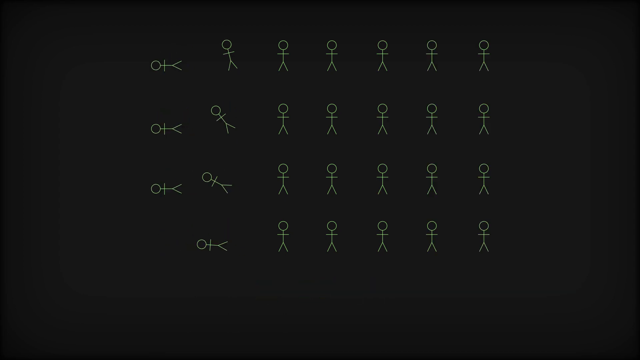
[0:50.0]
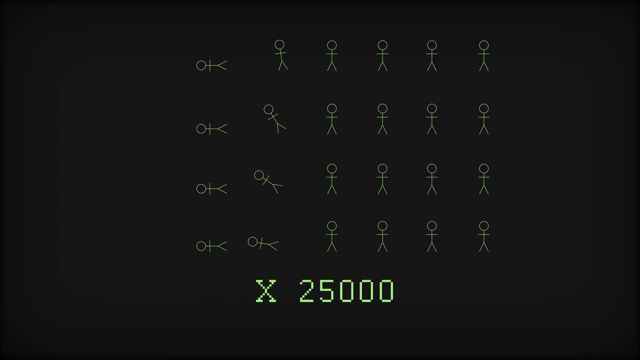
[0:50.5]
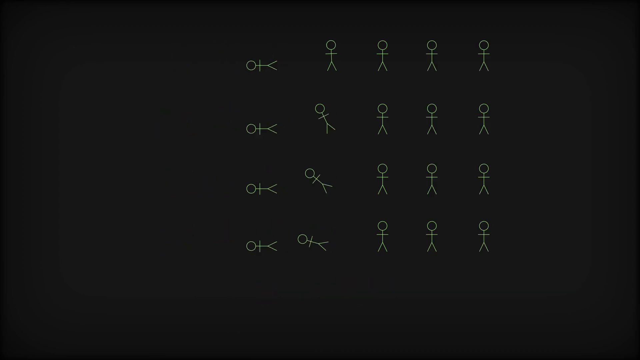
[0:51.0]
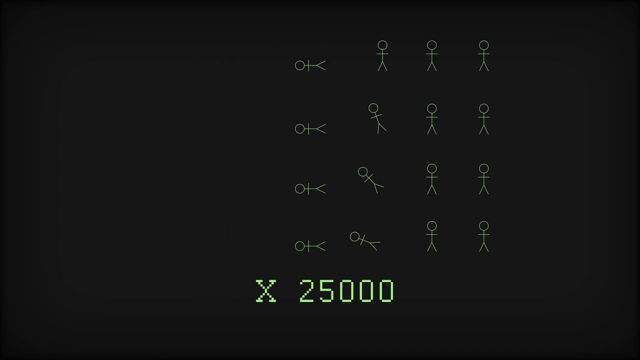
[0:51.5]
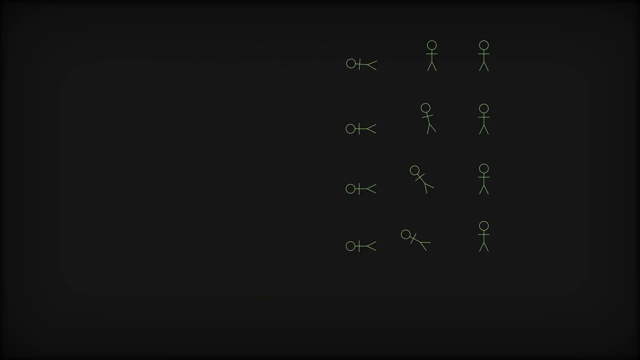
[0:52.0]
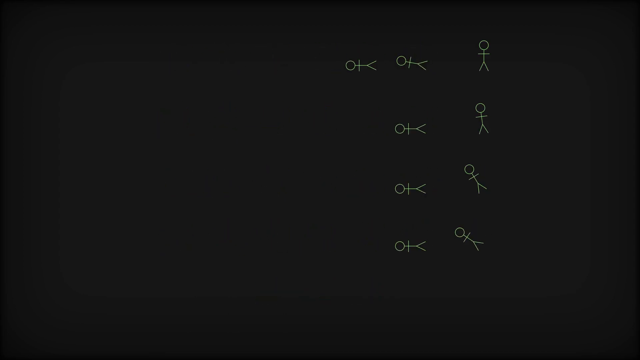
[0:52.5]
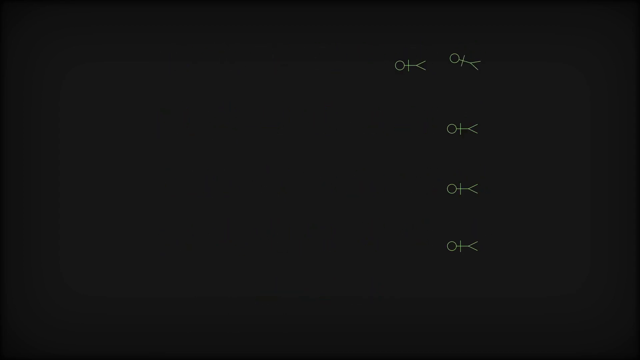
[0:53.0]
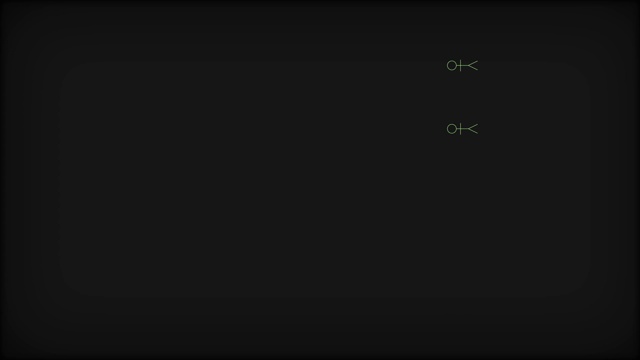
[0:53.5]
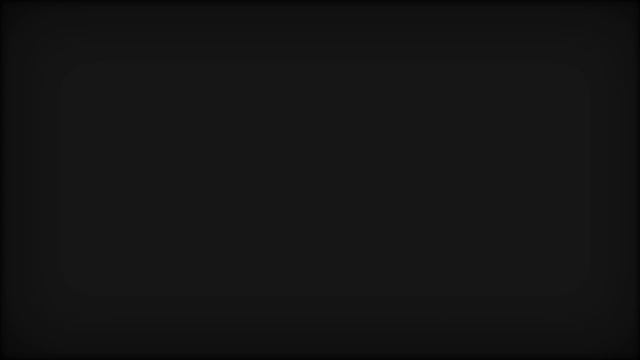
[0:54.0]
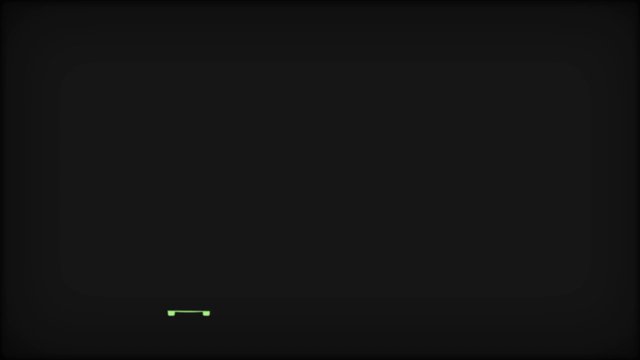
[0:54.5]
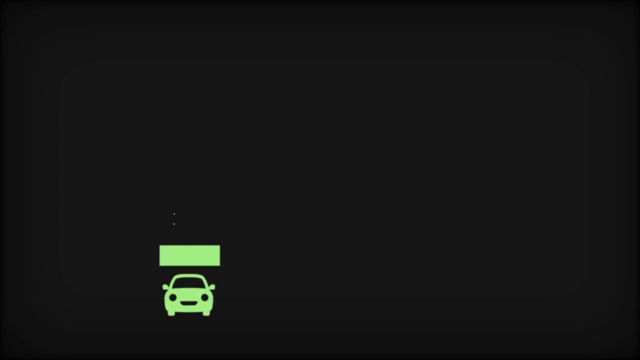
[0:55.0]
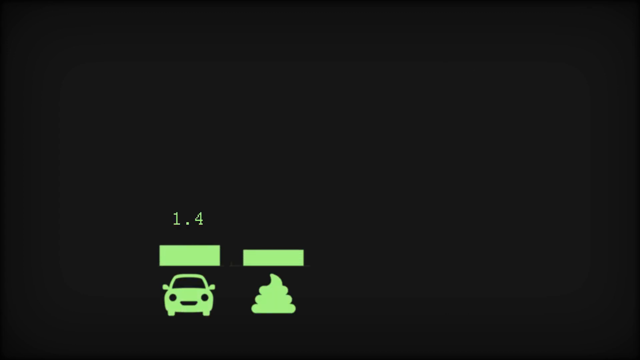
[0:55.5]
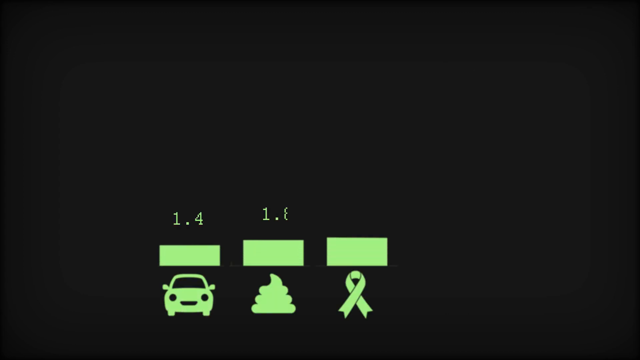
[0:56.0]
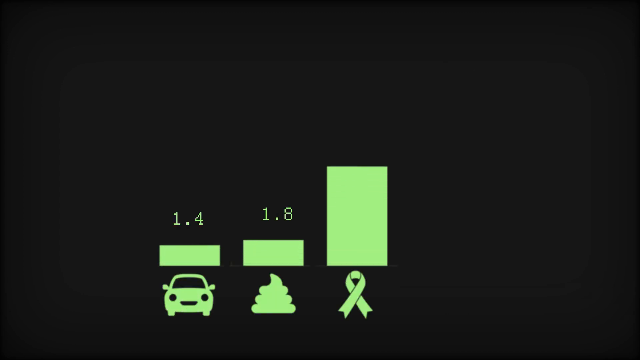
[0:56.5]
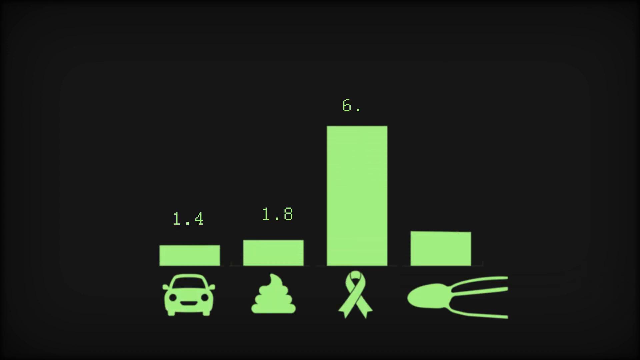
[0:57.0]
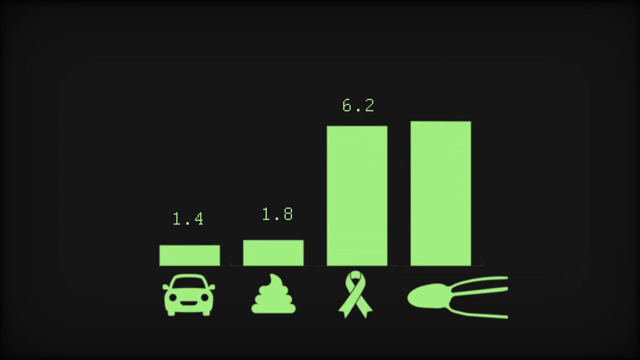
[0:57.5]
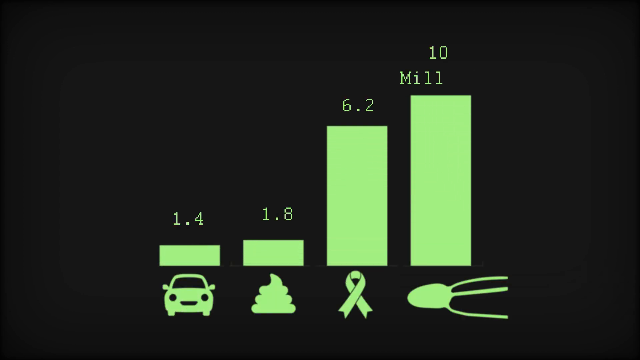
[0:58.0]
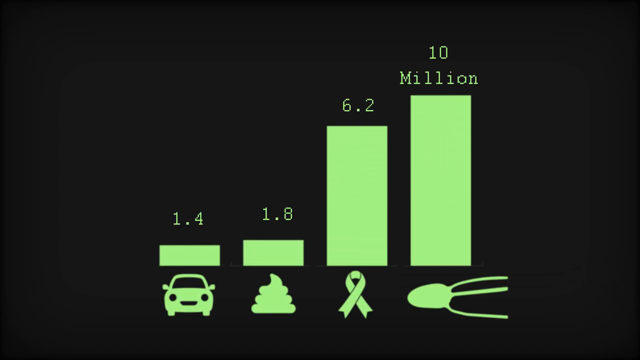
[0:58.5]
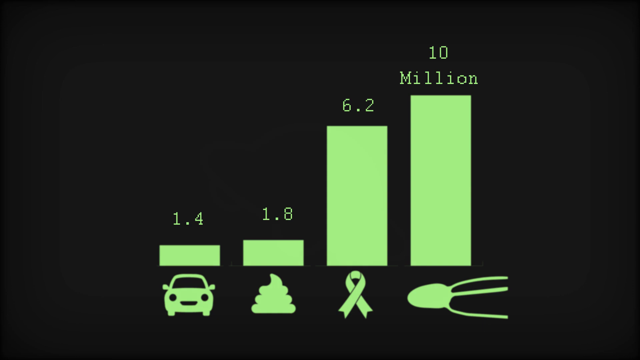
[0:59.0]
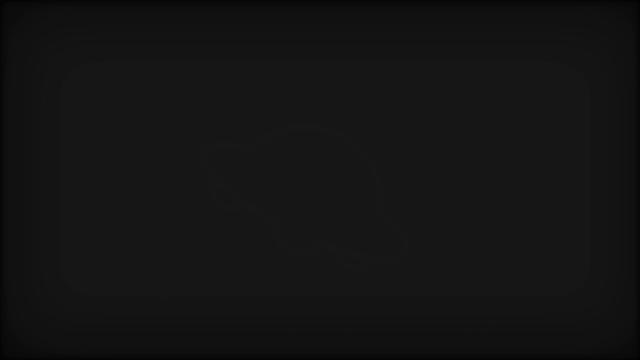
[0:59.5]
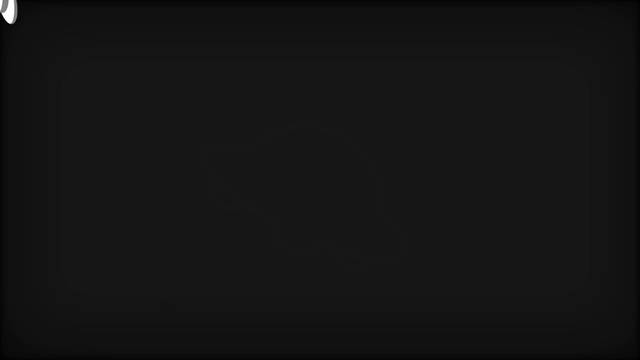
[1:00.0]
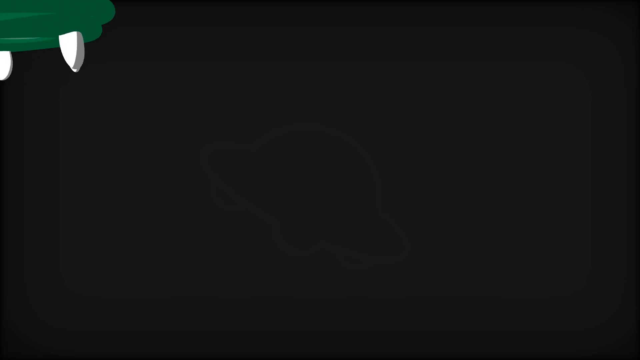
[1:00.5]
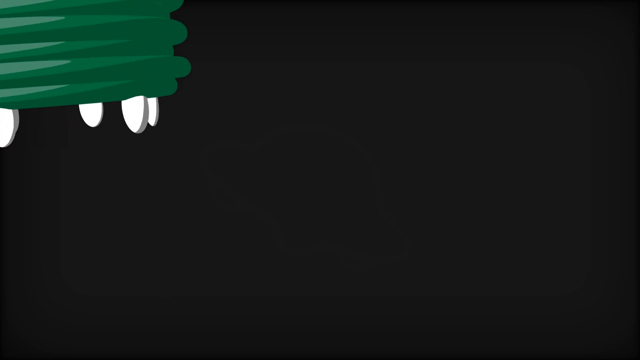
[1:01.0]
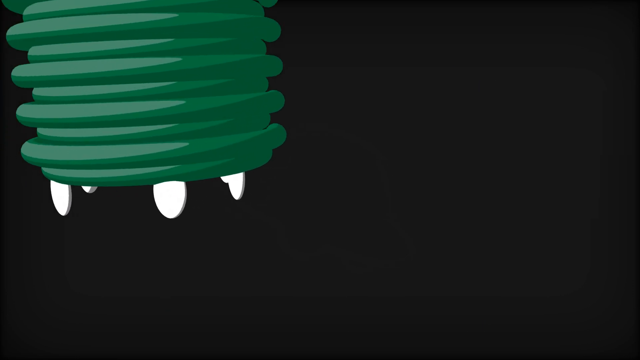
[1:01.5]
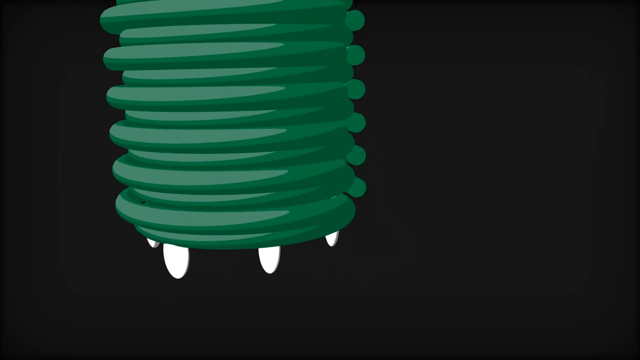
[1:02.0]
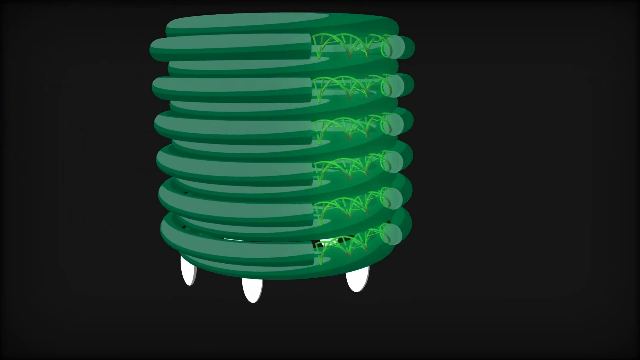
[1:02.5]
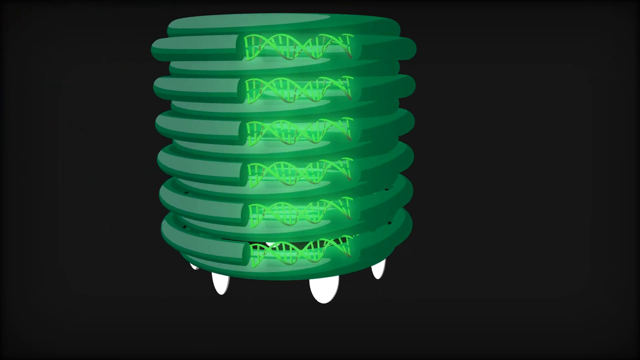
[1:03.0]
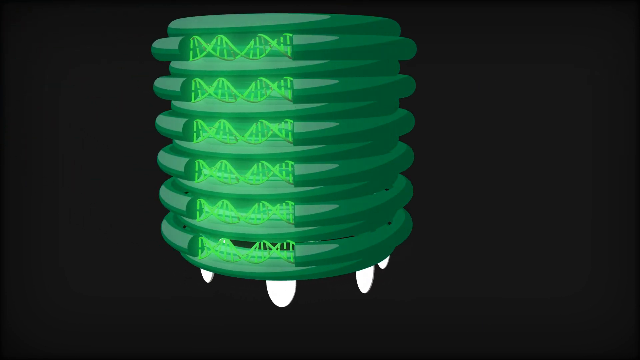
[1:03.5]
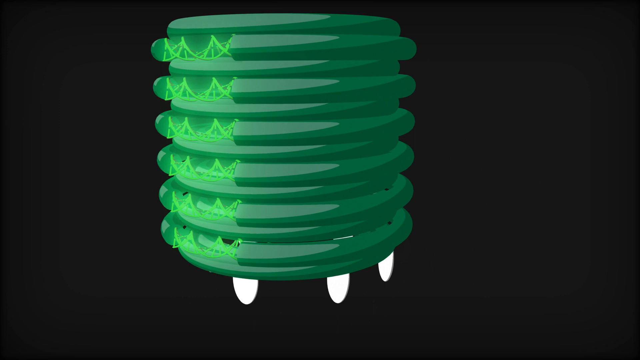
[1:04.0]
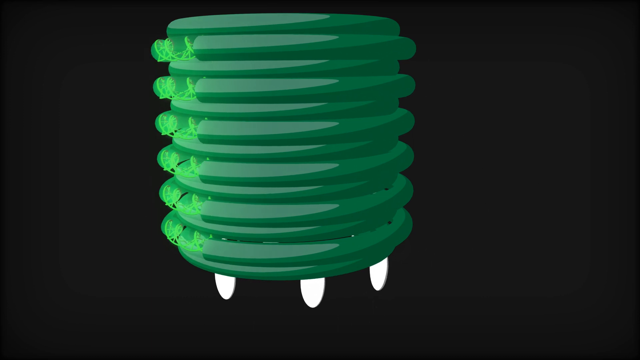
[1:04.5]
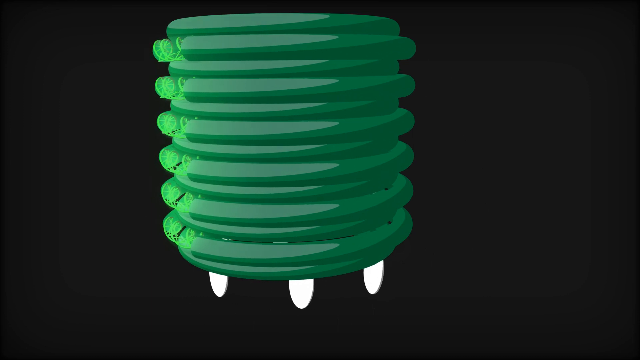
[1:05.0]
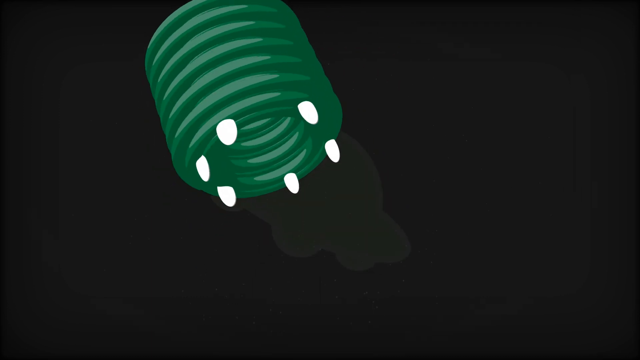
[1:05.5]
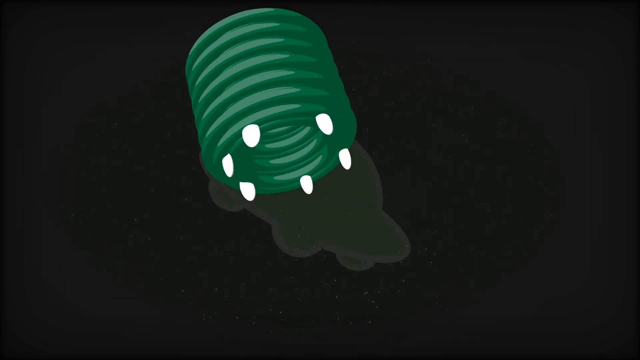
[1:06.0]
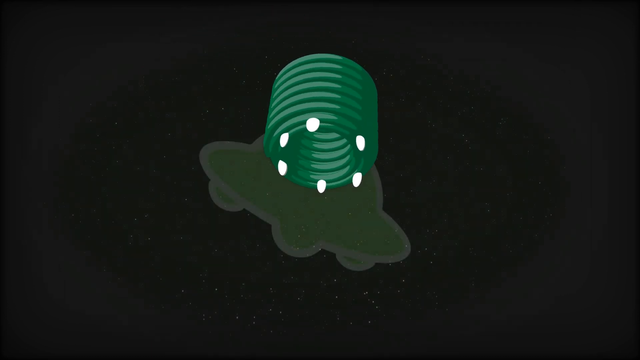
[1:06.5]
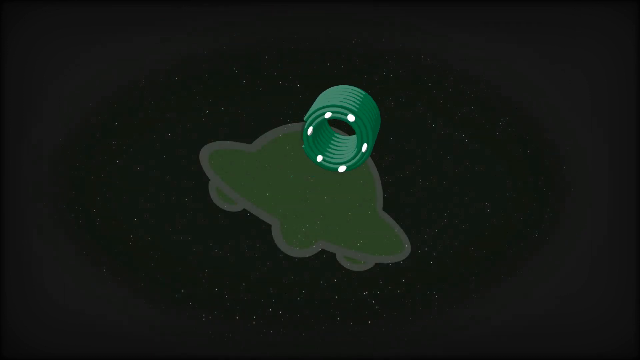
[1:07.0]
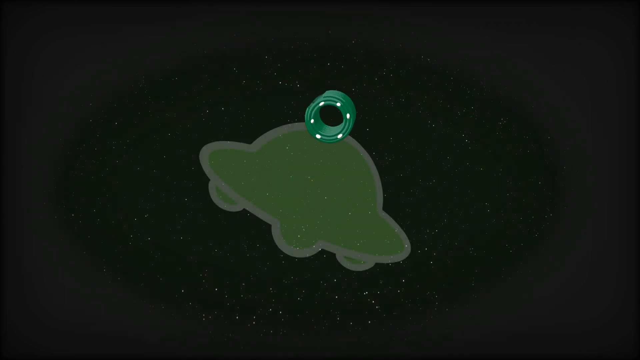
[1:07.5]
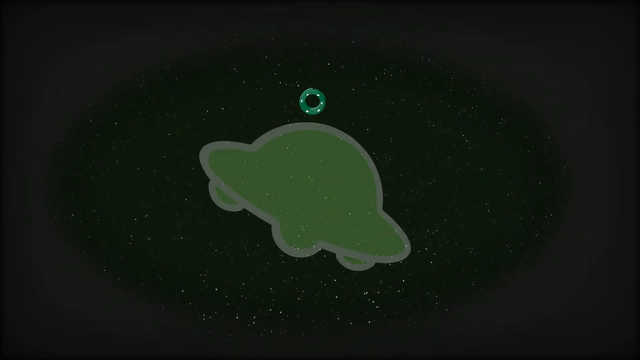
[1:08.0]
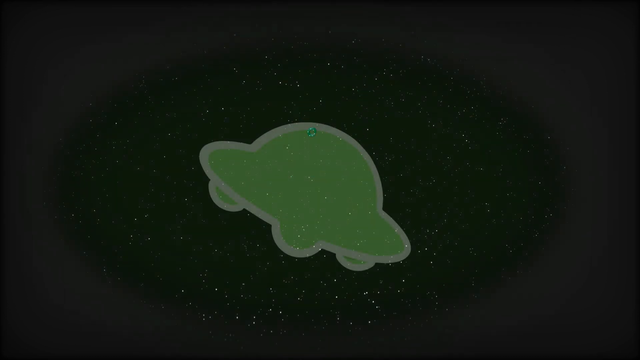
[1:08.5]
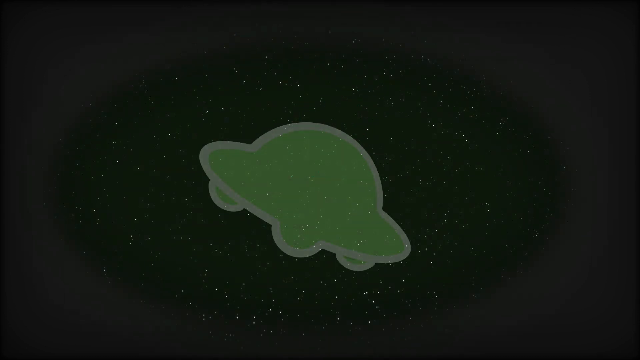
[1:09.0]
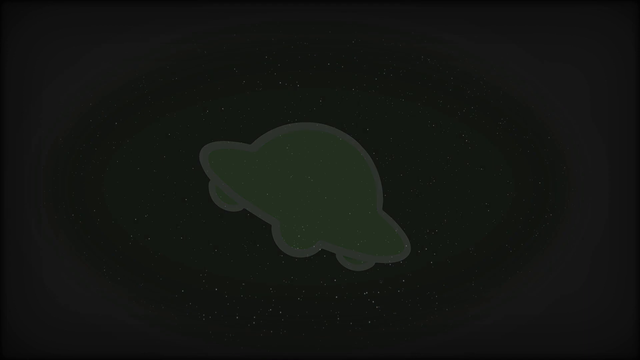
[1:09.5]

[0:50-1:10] Stick figures of human bodies fall down, and then a graphic comes up showing, in succession from left to right, four or five different numbers in a bar graph. There is a graphic of a car at the bottom with a bar showing 1.4. The next one over has a symbol that looks like it could be waste or excrement, apparently, with a bar of 1.8, just a little bigger. The next shows a ribbon with the number 6.2, its bar about three times higher than the other two. On the right is the squid-like bacterium, with "10 million" on top of its bar, which is barely bigger than the 6.2 bar. Then something comes out from the left: a cylindrical object that looks like a cyclotron or something, partially with corkscrew- or screw-like threads. It has three short white legs, shaped somewhat like eggs; when it pulls away, there are actually five or six of these. It goes into the flying saucer figure.